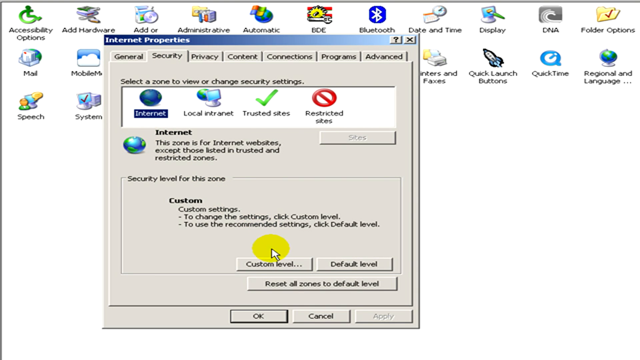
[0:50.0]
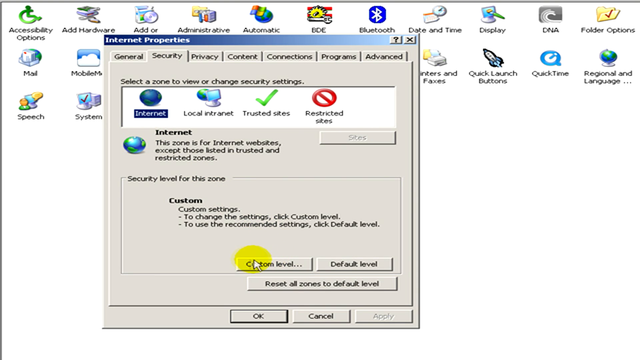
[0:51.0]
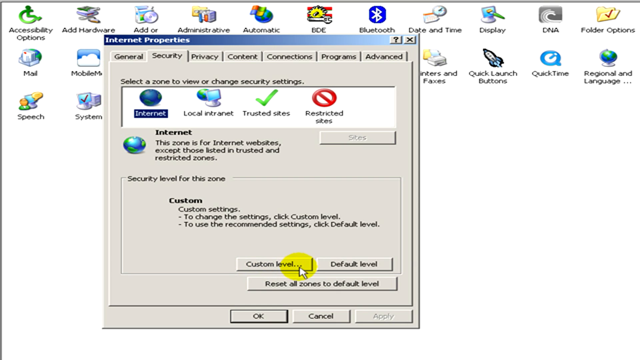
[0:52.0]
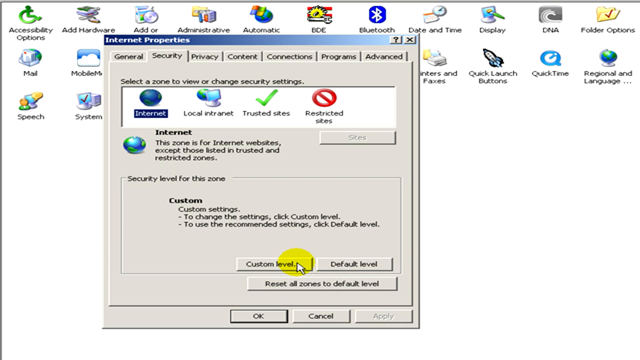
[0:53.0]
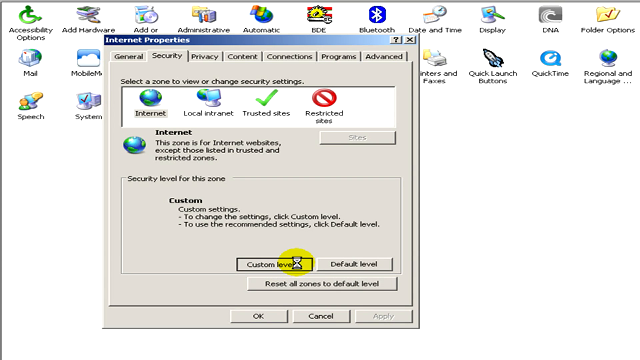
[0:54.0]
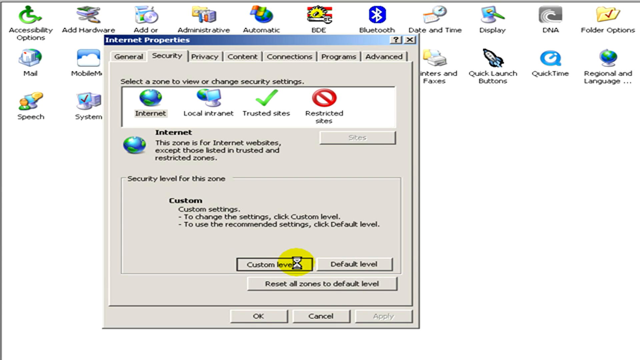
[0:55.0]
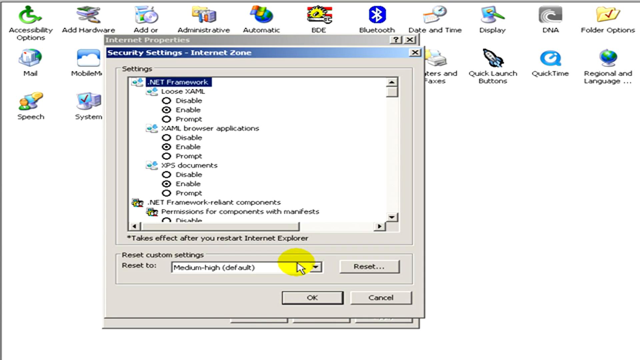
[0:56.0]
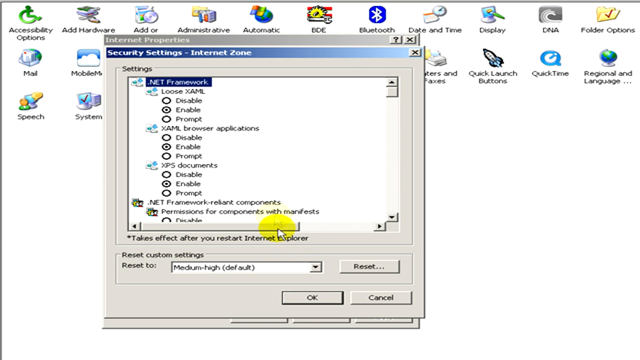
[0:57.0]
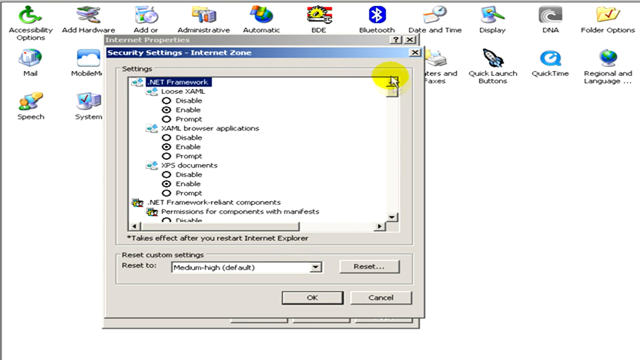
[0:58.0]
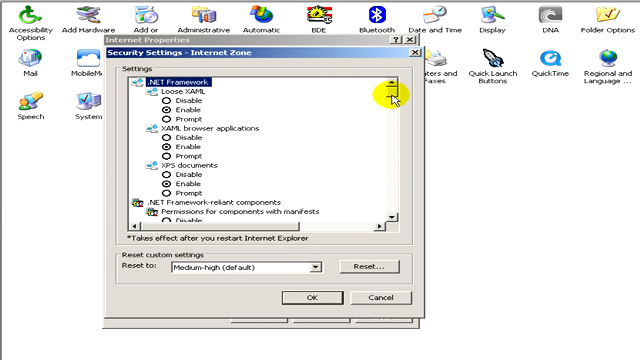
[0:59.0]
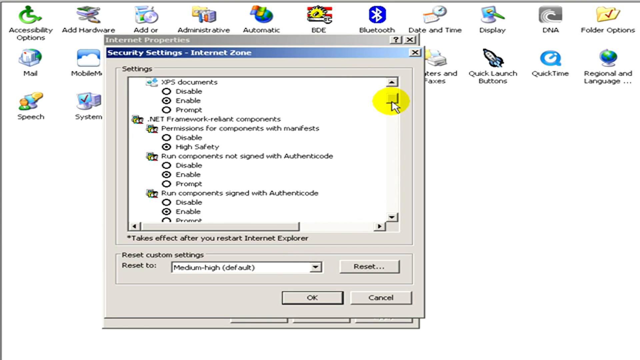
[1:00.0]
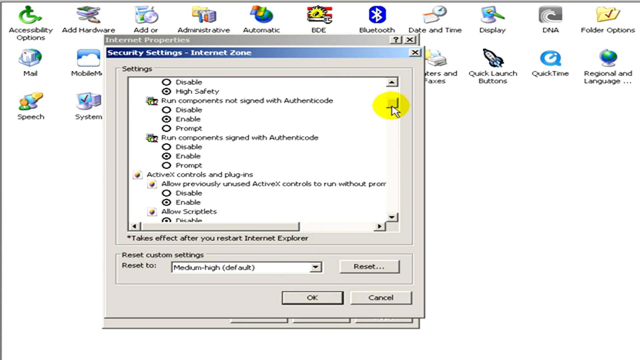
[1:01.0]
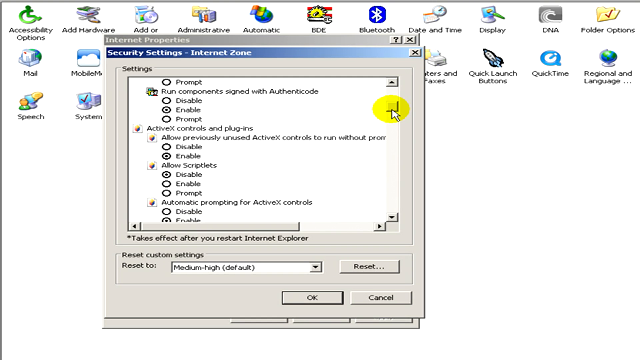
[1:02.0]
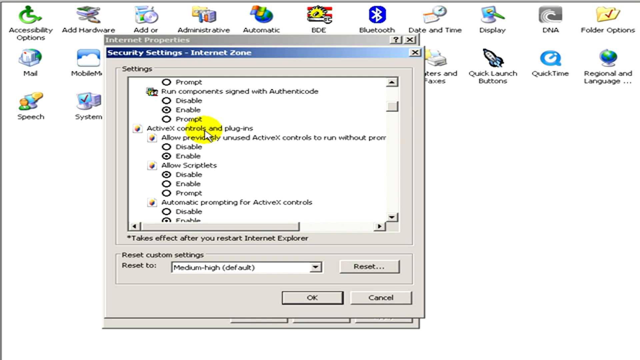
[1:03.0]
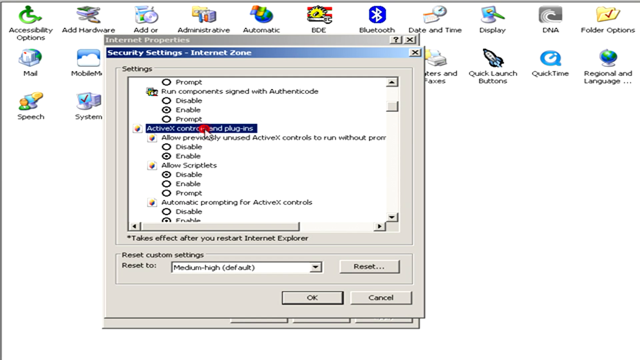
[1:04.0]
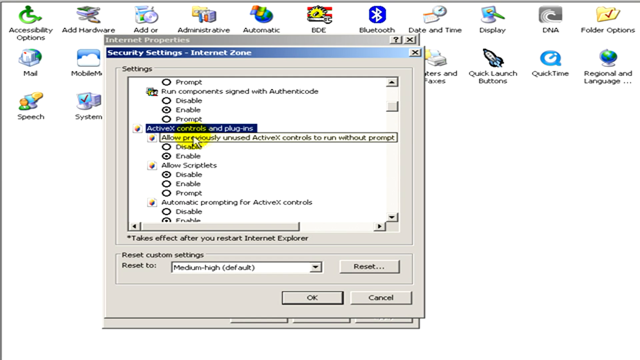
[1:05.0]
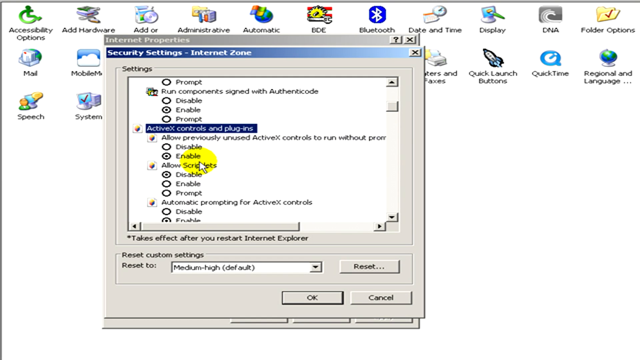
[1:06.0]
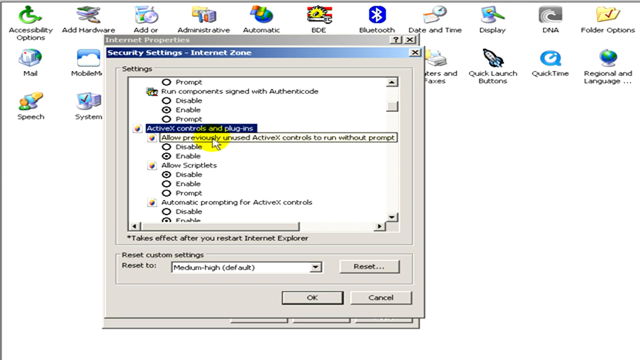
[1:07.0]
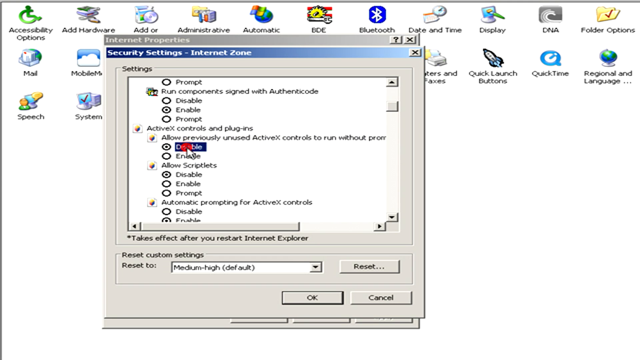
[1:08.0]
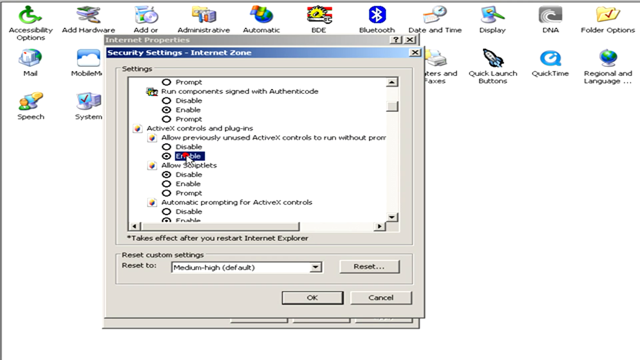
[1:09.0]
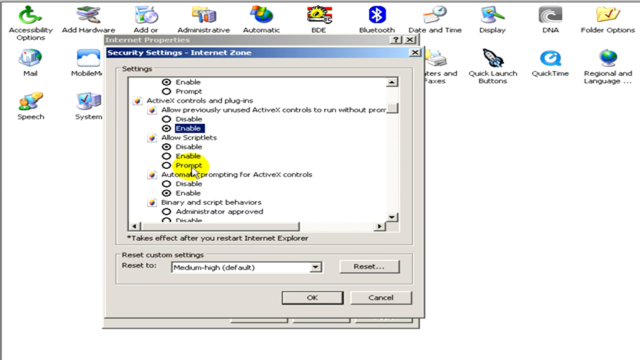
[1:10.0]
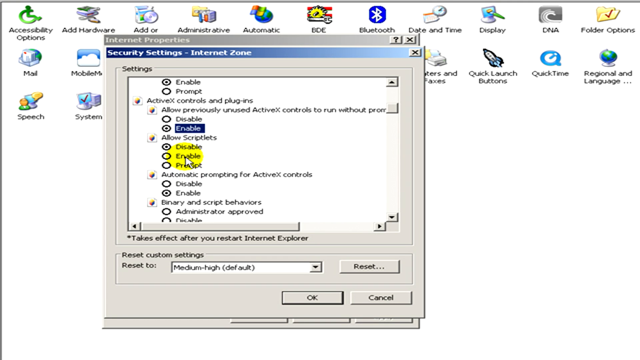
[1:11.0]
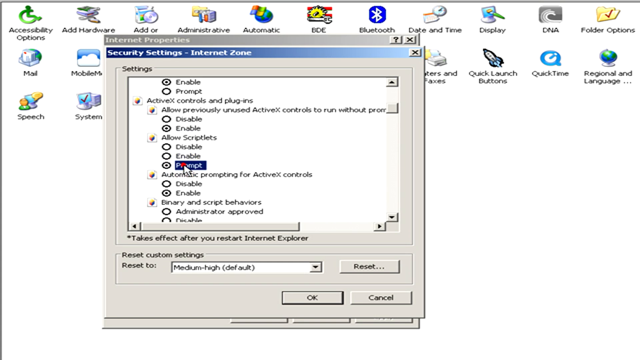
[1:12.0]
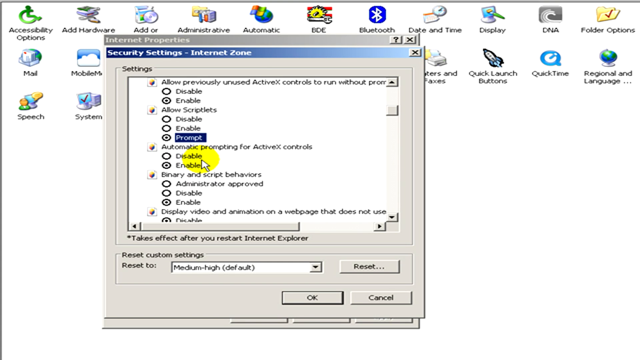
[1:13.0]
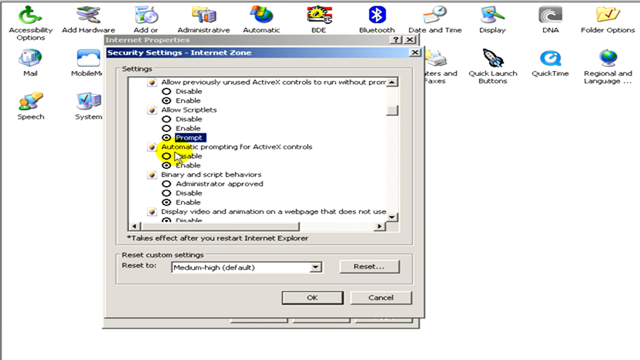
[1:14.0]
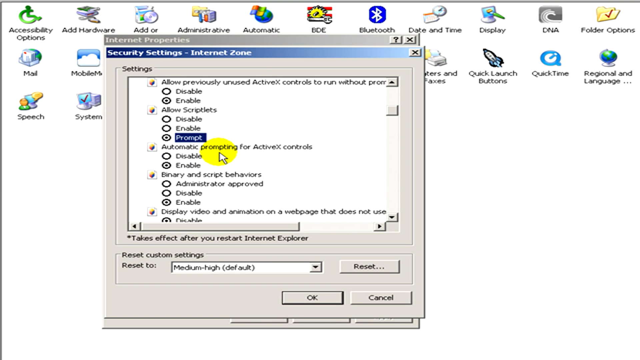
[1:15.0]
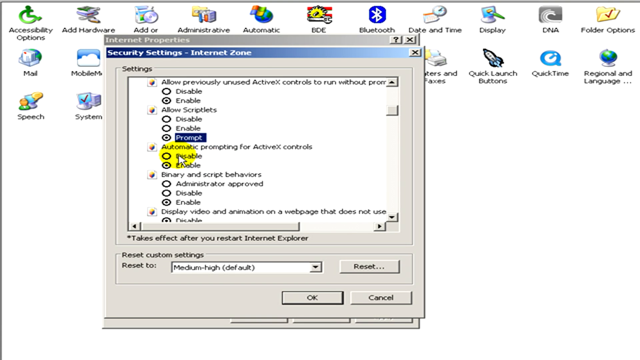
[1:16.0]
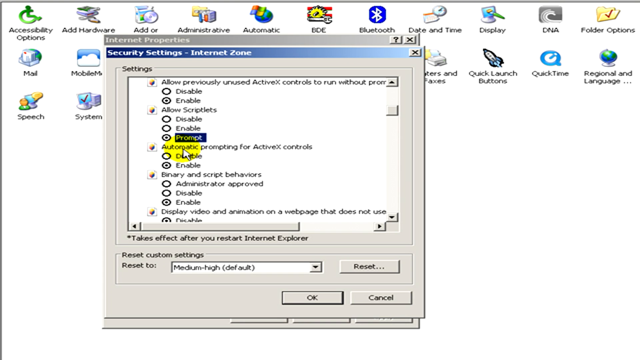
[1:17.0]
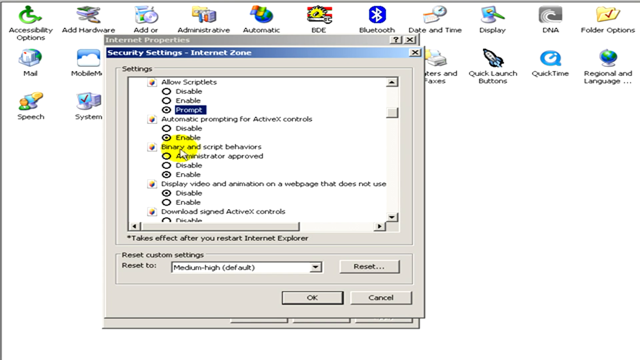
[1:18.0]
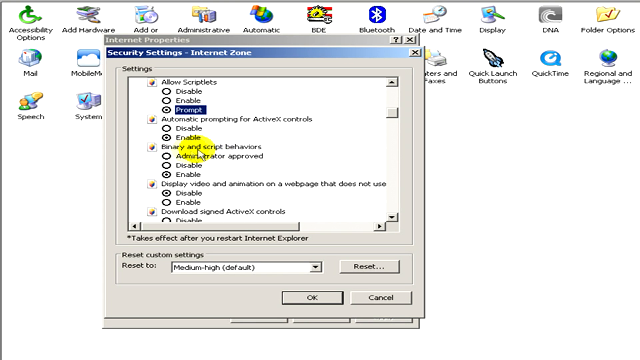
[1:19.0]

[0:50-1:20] On the Security tab of Internet Properties, the text reads "select a zone to view or change security settings", with four zones: "internet", "local intranet", "trusted sites" and "restricted sites". Below that, under "internet", it says the zone is for internet websites except those listed in trusted and restricted zones. Further down, "security level for this zone" shows "custom settings", with the text "to change the settings, click custom level" and "to use the recommended settings, click default level". The person selects custom level, it loads for a second, and a window titled "Security Settings, Internet Zone" opens. The first highlighted option is "Net Framework", with "LooseXAML" below it. They scroll down the page, click on ActiveX Controls and Plugins, change it to Disable, then change it back to Enable.